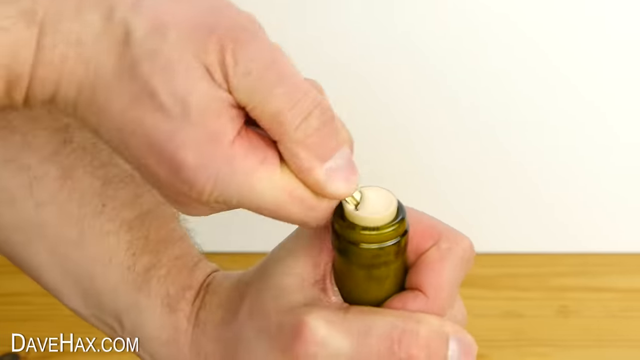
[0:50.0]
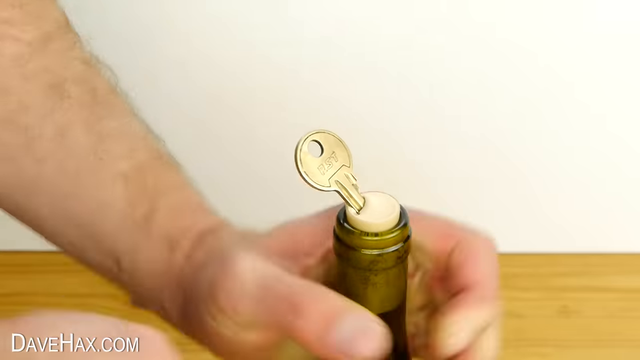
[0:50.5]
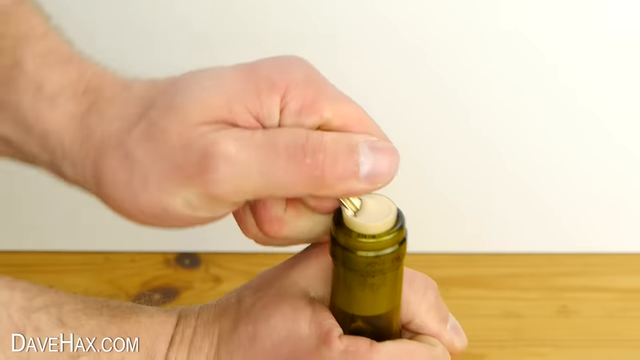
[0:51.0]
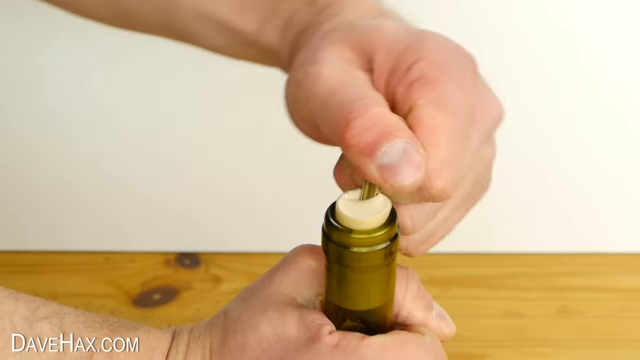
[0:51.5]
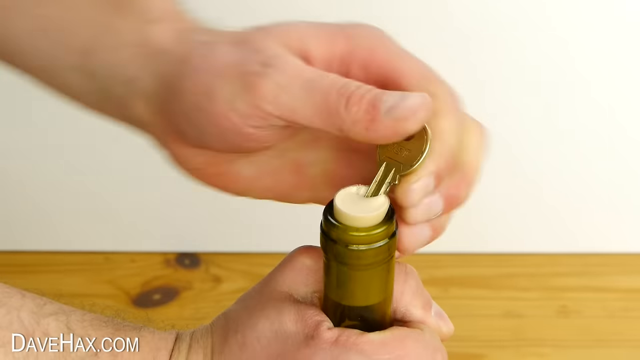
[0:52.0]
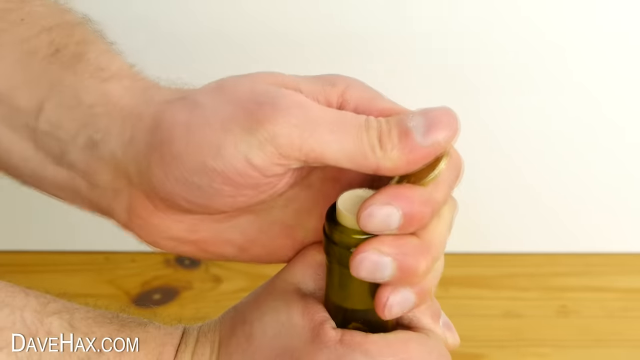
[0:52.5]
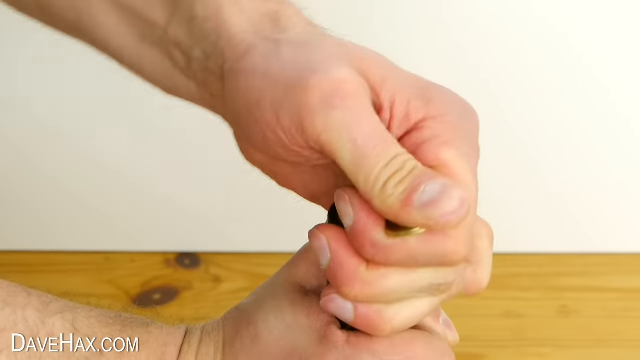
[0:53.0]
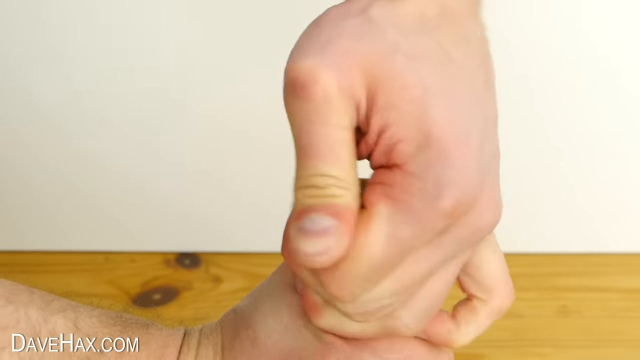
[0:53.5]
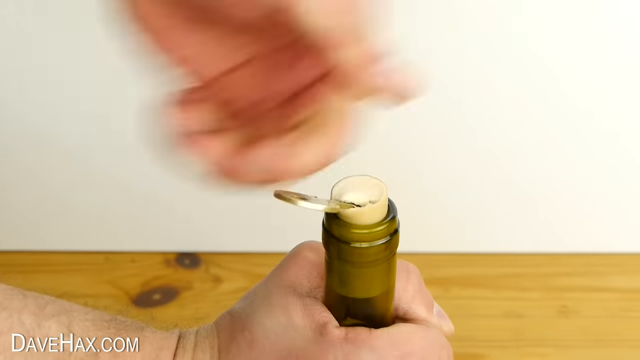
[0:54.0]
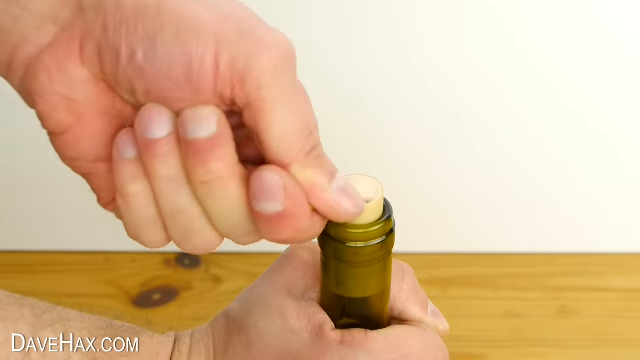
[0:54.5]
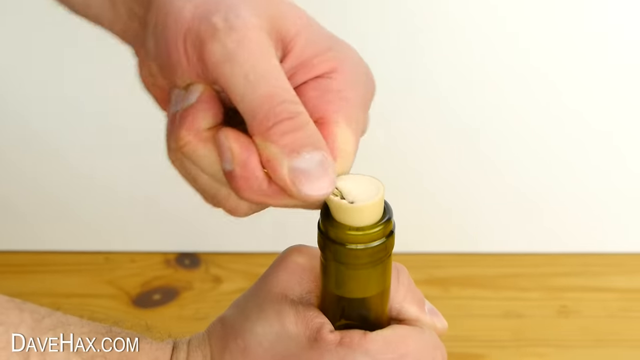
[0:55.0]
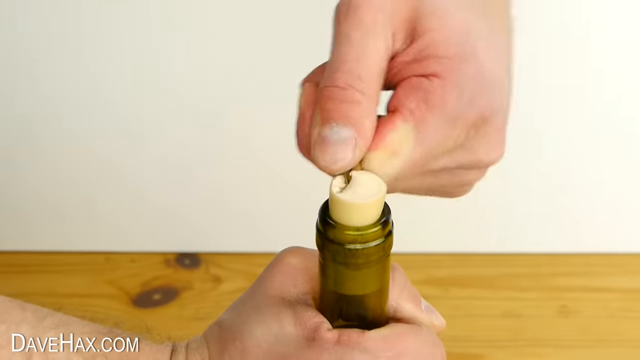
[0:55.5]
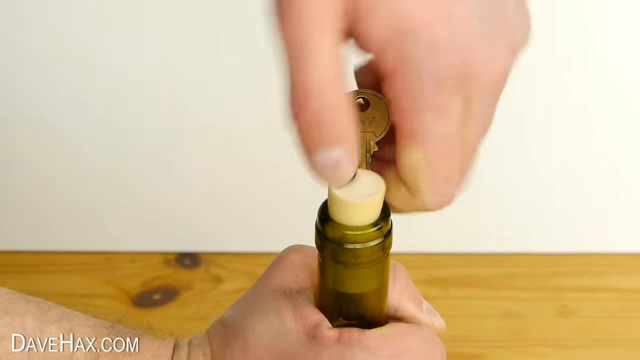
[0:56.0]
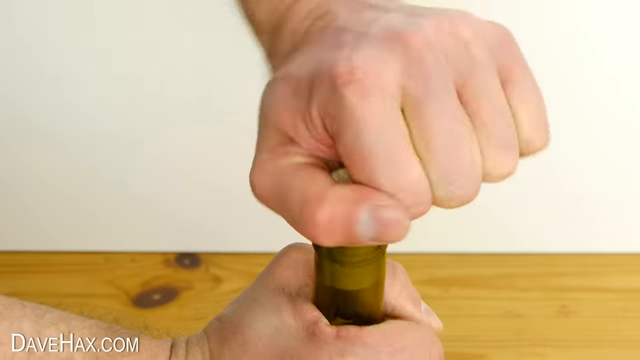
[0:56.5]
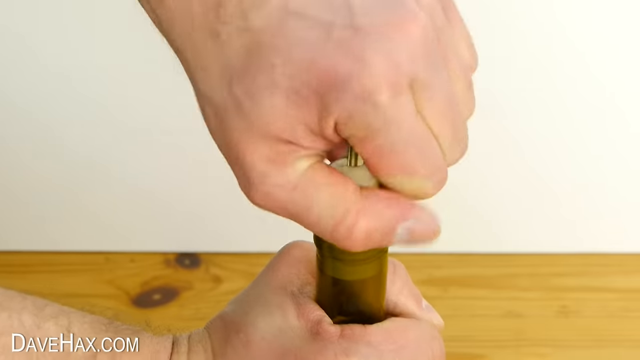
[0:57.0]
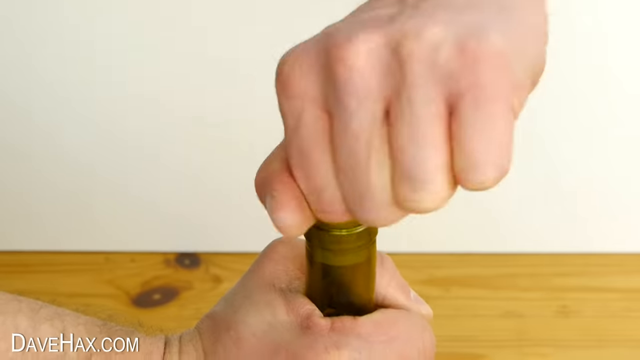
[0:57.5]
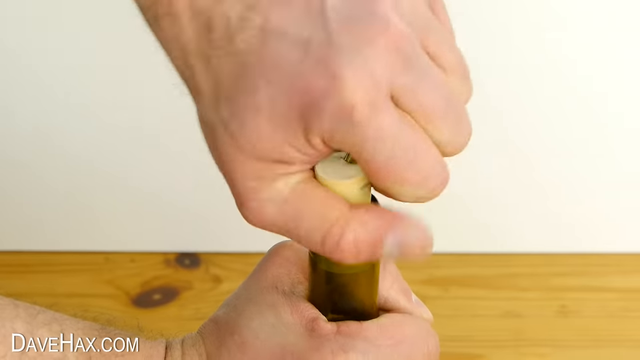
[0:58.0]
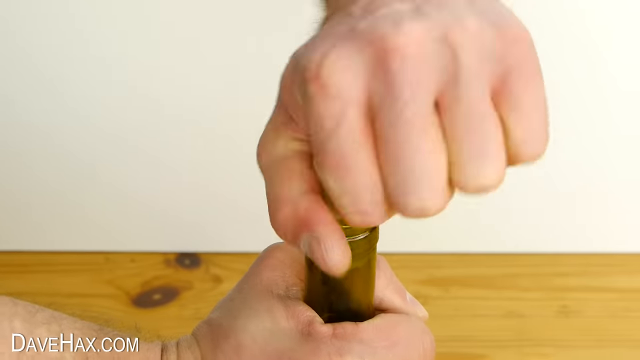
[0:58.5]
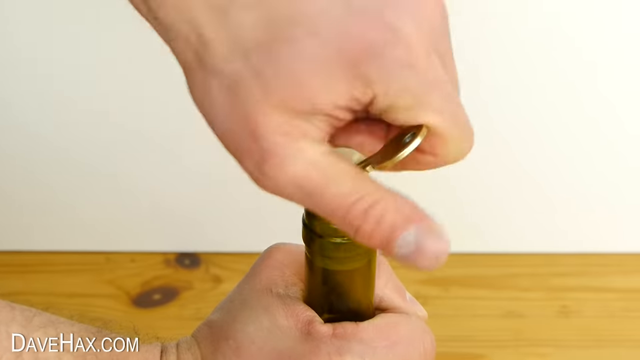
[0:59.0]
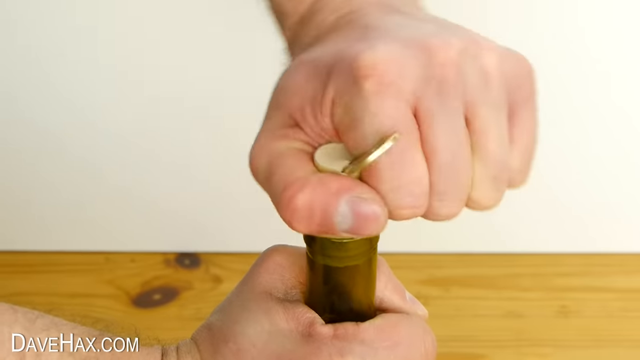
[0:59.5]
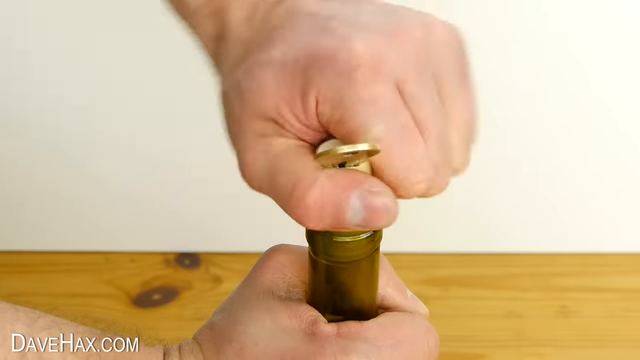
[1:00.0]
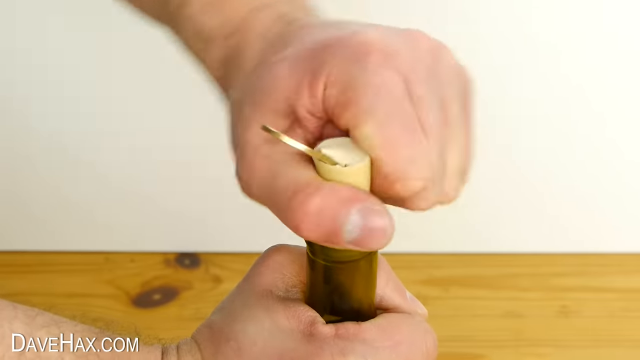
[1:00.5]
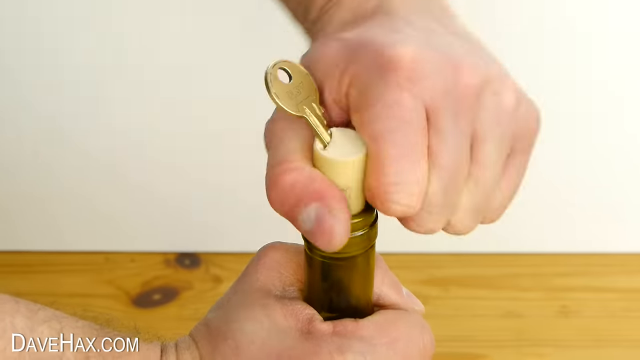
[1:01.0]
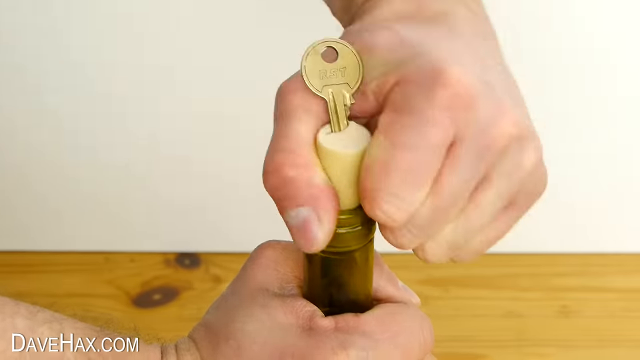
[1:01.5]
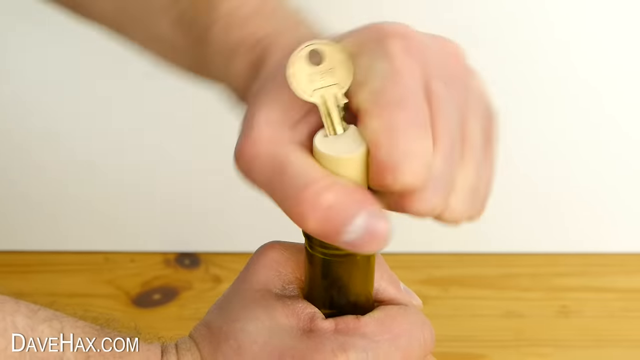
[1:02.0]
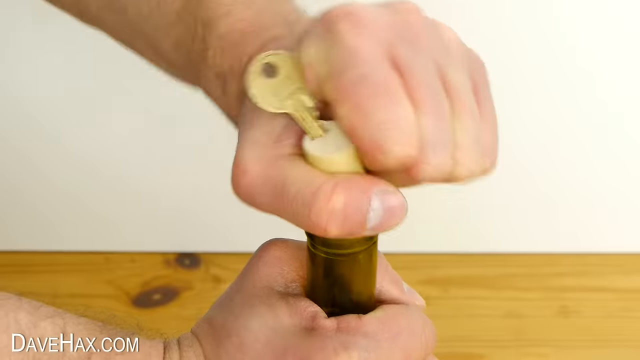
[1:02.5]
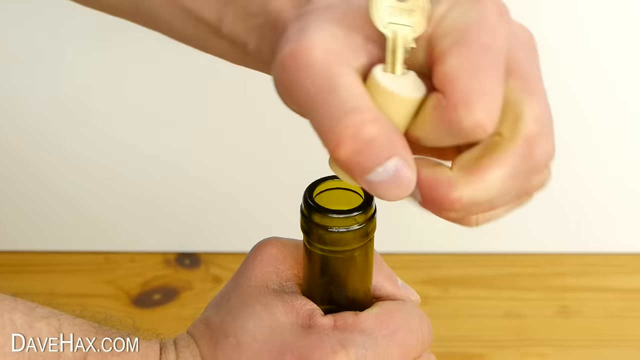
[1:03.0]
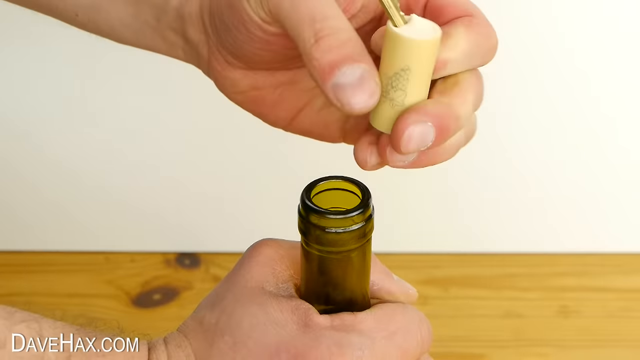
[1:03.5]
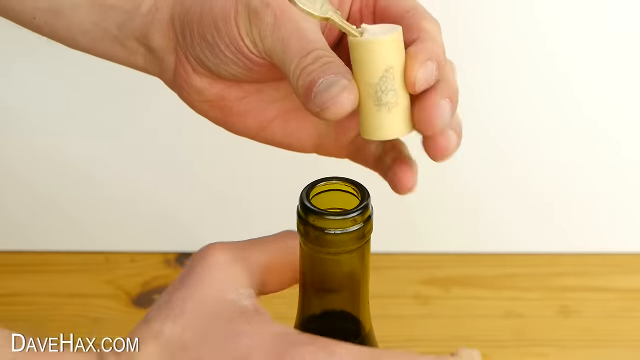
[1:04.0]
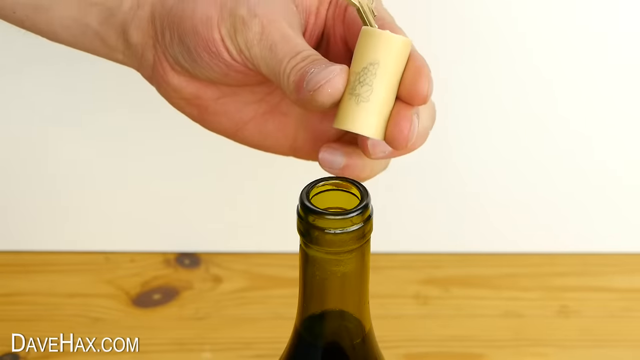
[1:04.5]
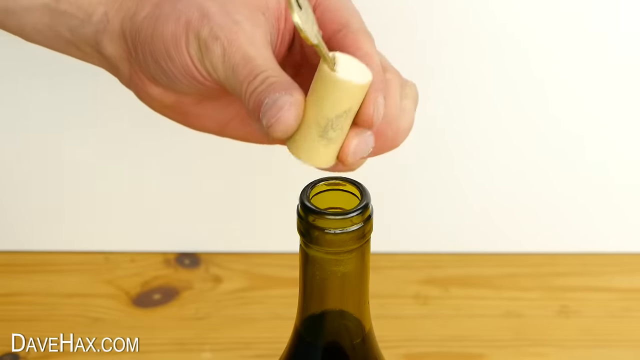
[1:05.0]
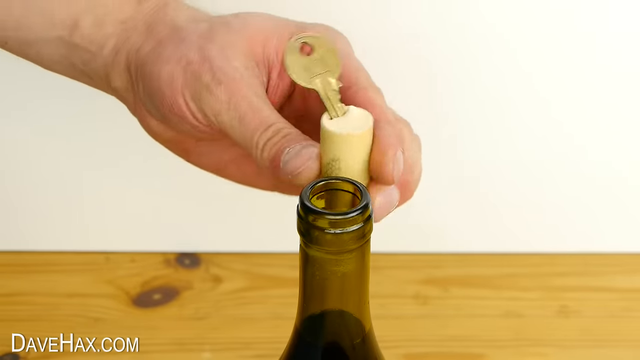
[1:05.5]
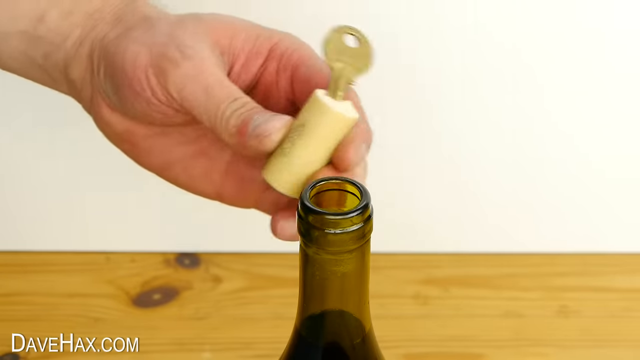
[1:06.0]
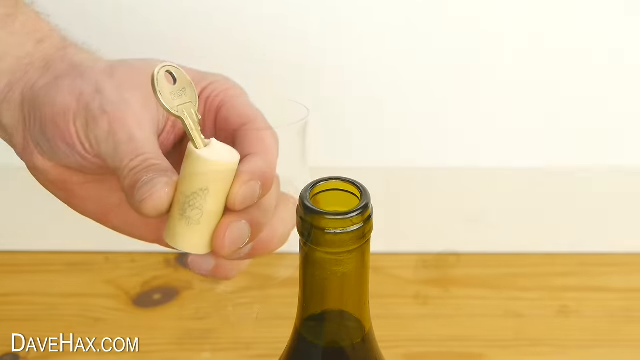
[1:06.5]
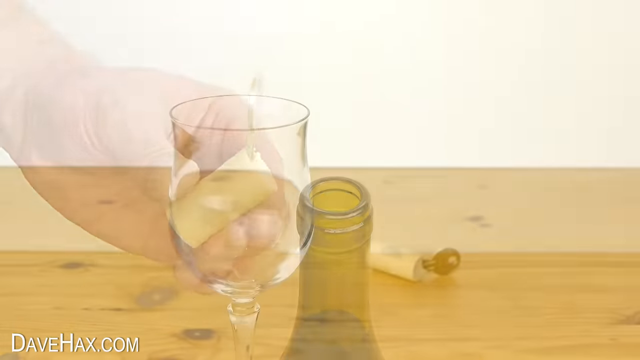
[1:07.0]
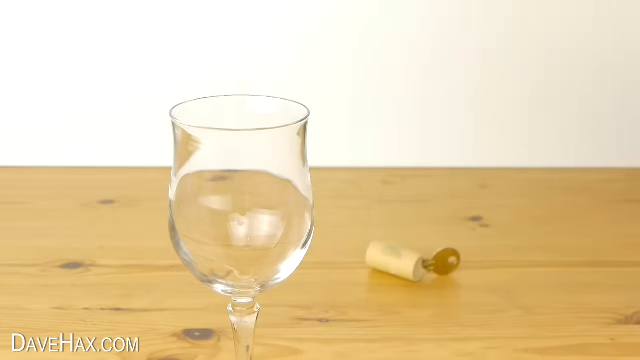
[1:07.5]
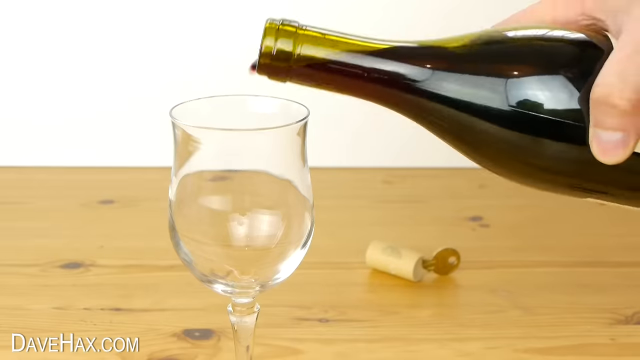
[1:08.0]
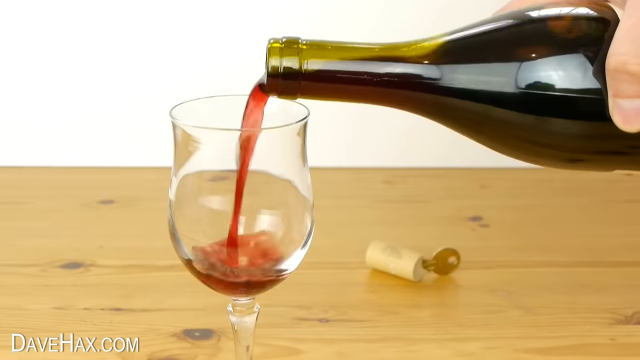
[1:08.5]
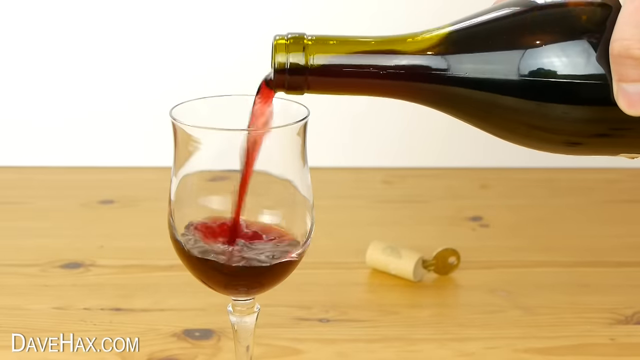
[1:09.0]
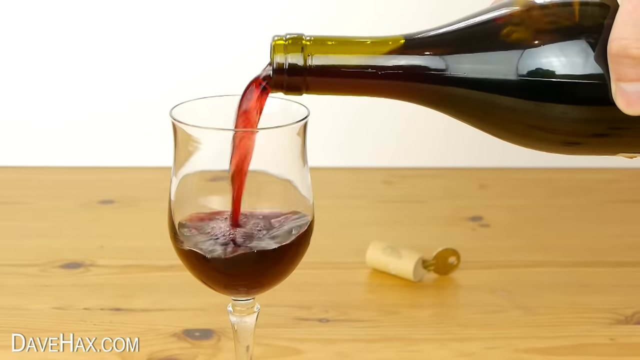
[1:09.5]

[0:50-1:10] He continues to twist and turn the key. The cork looks like it might be ripping a little, though possibly it is only slightly bigger around where the key is. He is no longer using the blue cloth. The cork comes all the way out without breaking, and he pours red wine into an empty wine glass while the cork lies on the knotted wood counter. The wall behind the counter is an eggshell white or off-white. The key is the very small brass key, like one for a community mailbox.